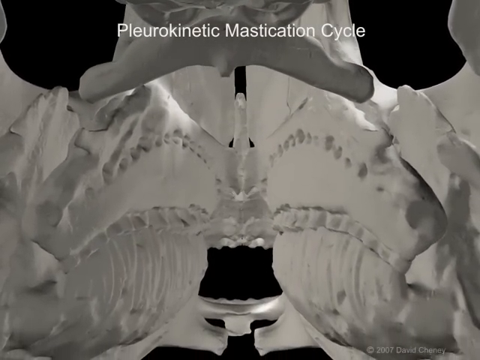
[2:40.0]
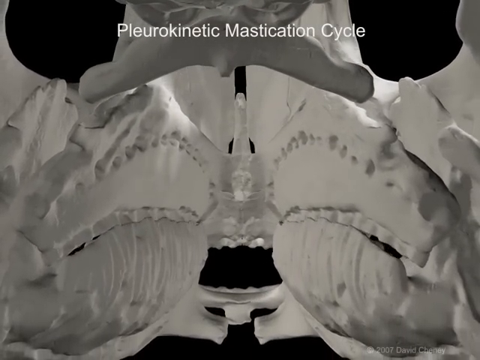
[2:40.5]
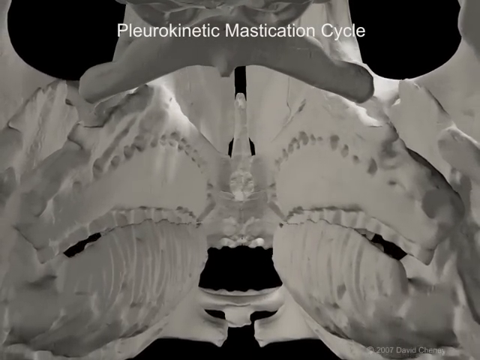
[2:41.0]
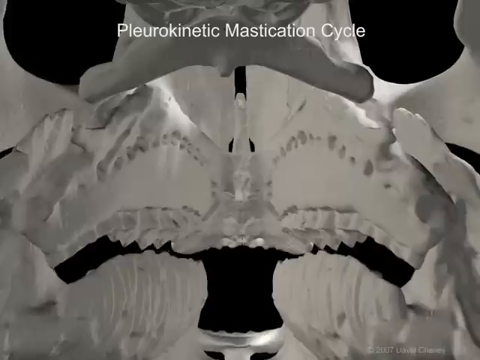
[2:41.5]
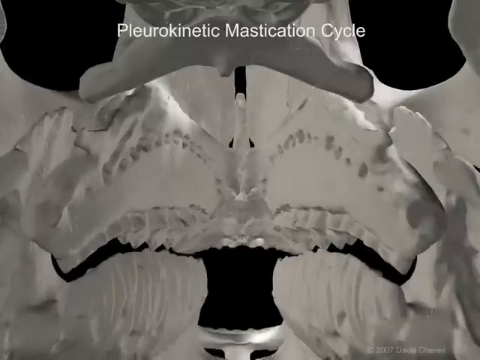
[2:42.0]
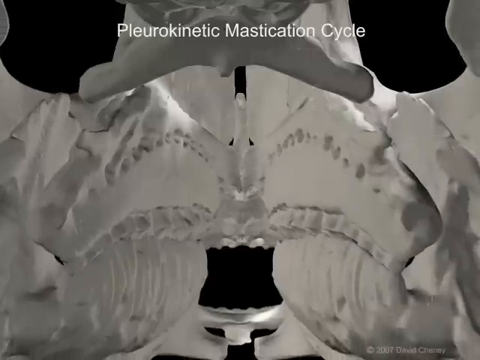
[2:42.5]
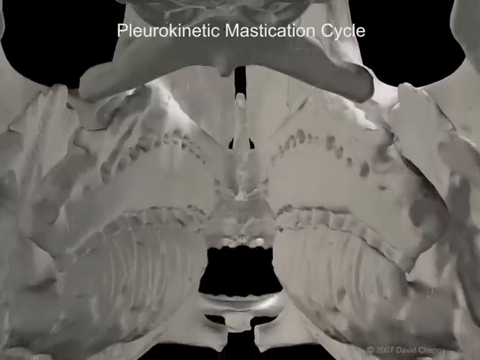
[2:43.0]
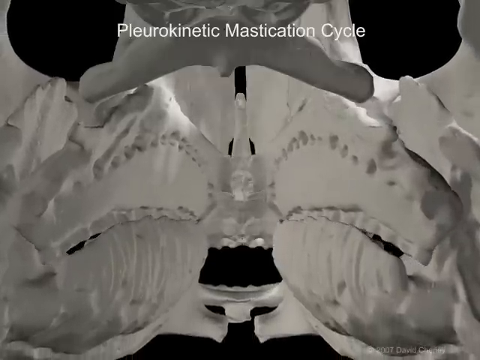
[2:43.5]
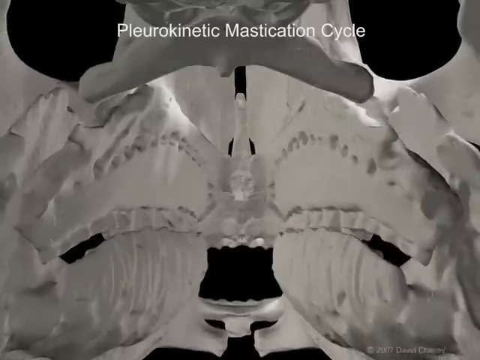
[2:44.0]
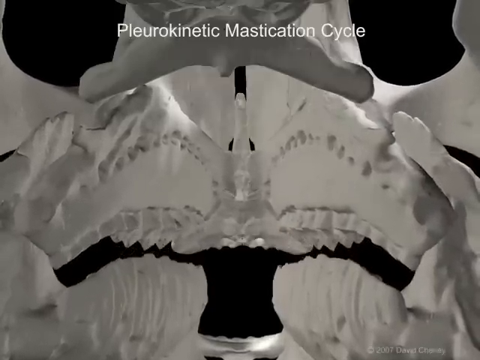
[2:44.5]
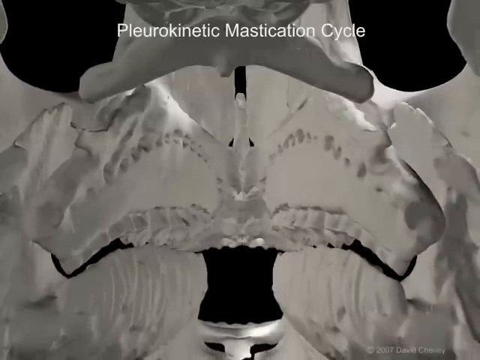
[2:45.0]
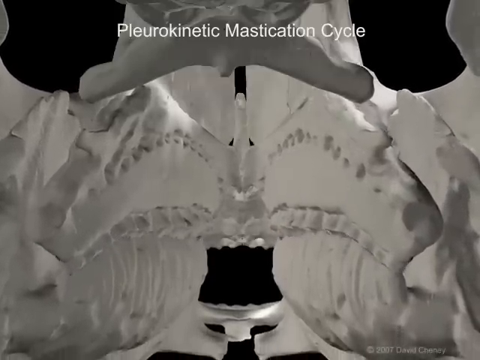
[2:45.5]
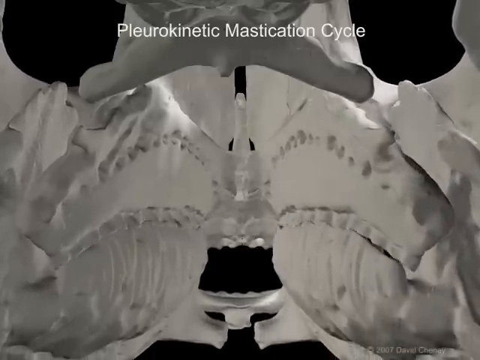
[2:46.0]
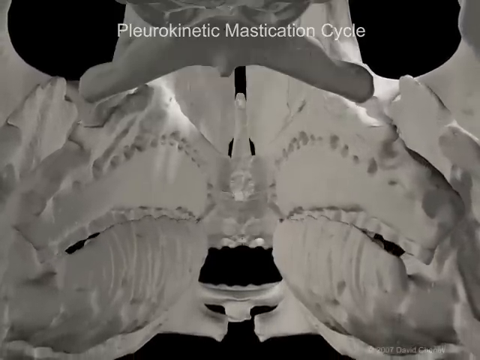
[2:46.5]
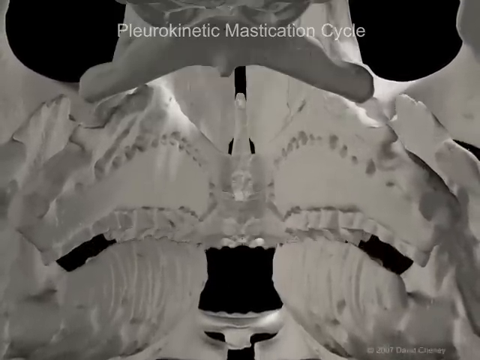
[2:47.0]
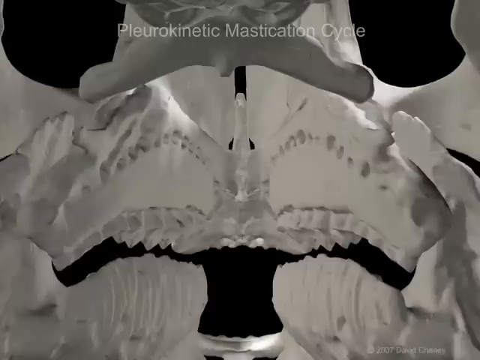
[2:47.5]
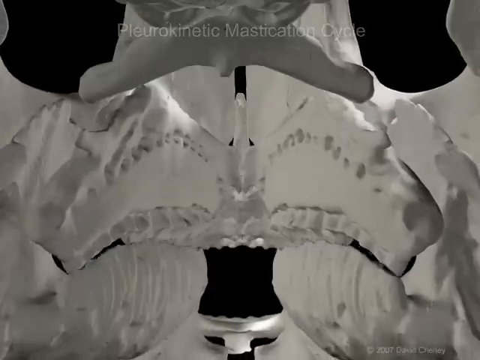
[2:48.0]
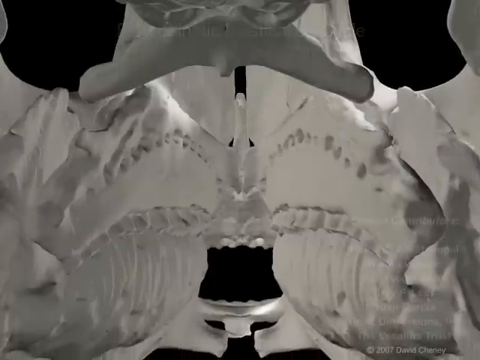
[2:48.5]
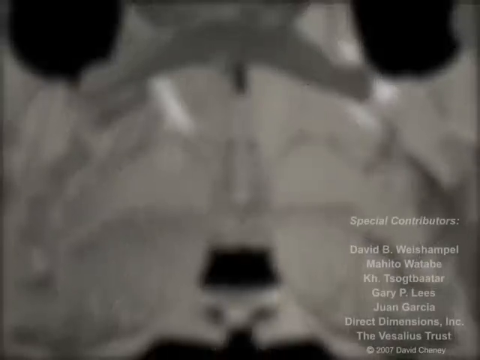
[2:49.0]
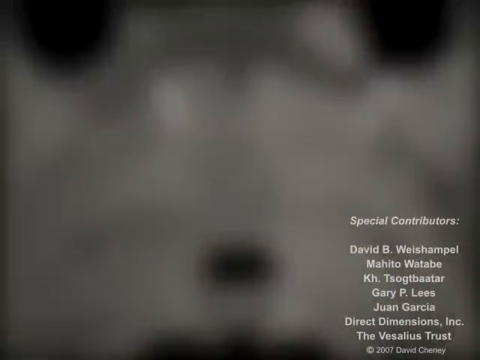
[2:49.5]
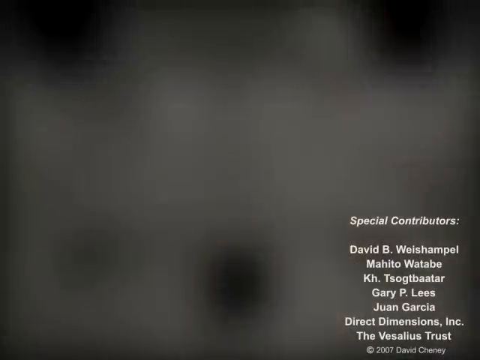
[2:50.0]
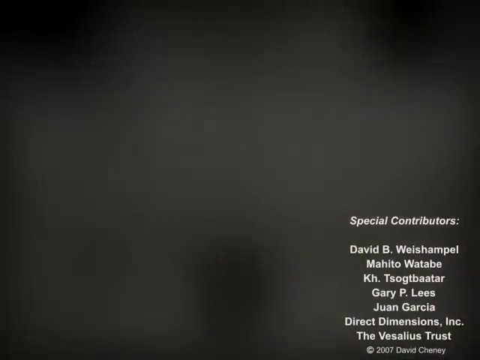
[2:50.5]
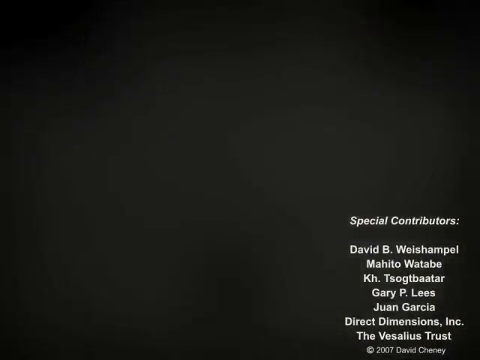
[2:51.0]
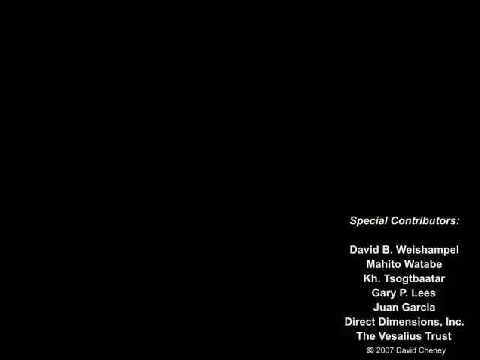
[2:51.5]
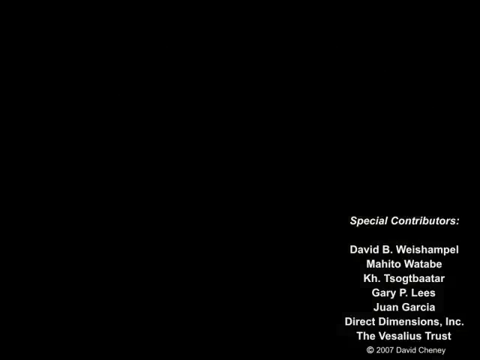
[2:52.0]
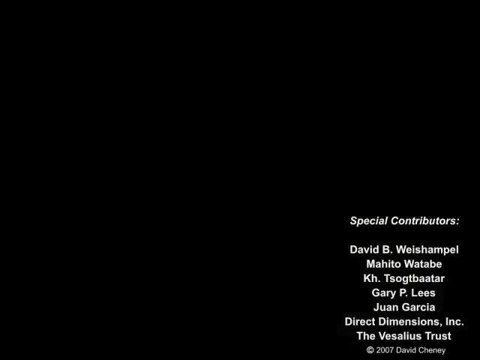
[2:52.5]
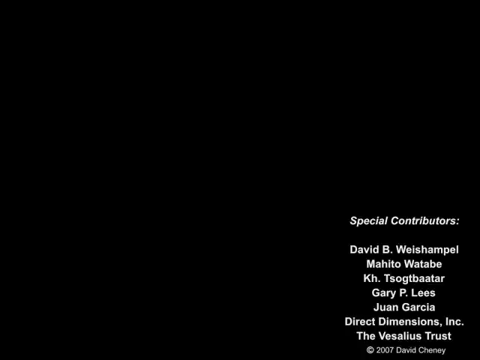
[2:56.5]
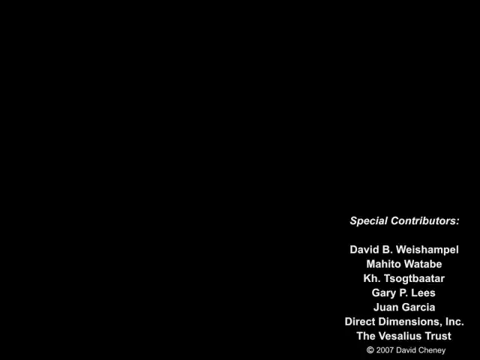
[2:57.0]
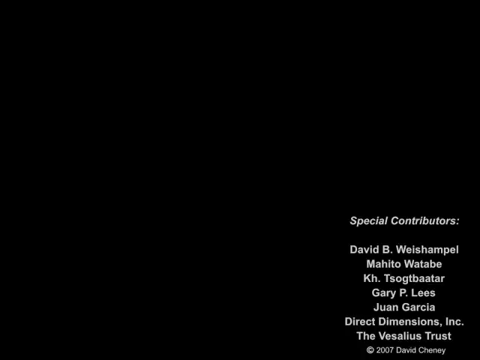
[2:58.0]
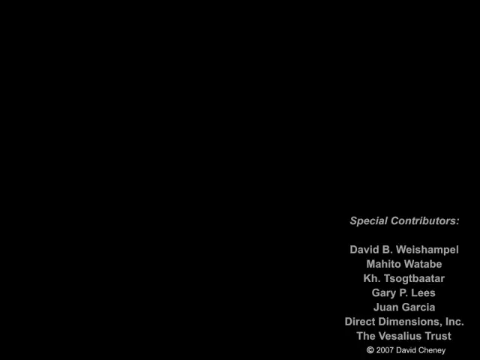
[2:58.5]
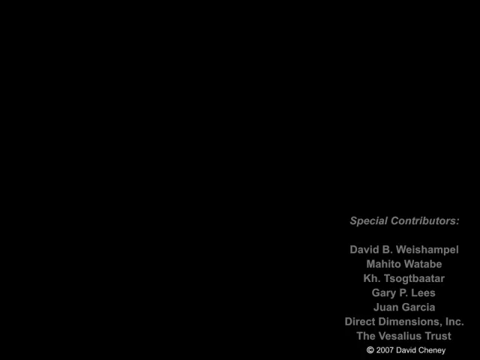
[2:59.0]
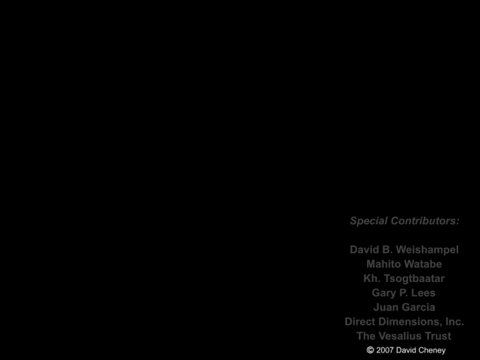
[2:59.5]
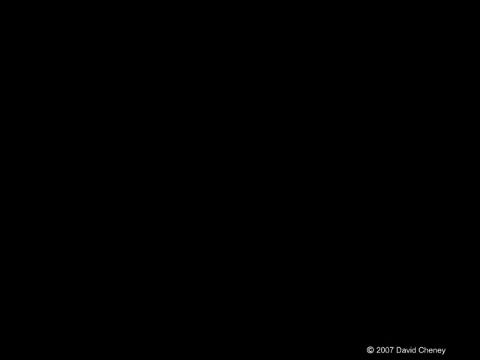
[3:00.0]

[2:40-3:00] The view is kind of like an inside view of the dinosaur's mouth, showing the jaws. It is hard to tell how many rows or layers of teeth there are in each section, such as the upper right part of the mouth, and some sections have more than one. The title at the top is still "pleurokinetic mastication cycle." All the parts move in an intricate way. The screen then goes black, and in the lower right corner text reads "special contributors," followed after some space by "David B. Weishampel," "Mahito Watabe," "Htsogtbaatar," "Gary P. Lees" and "Juan Garcia."